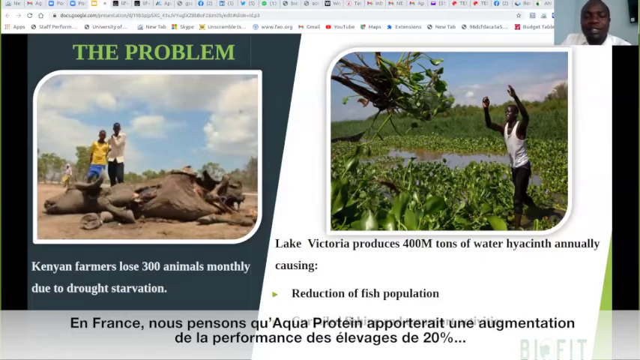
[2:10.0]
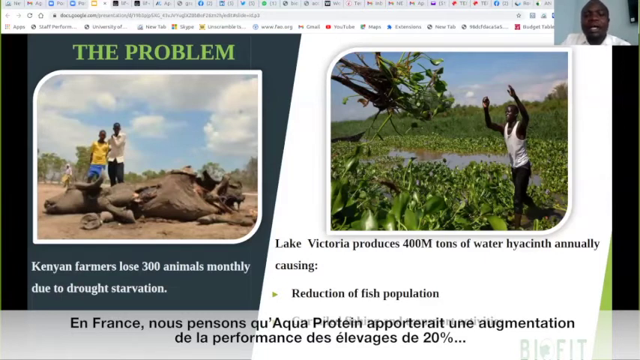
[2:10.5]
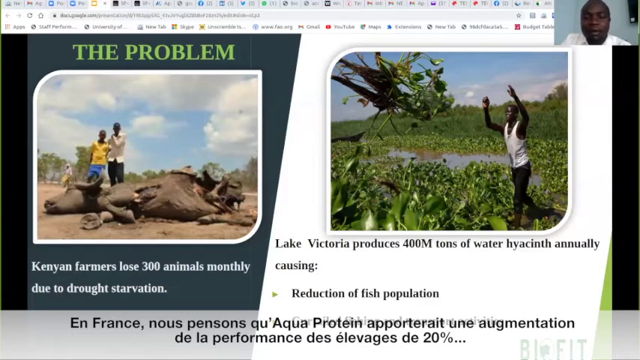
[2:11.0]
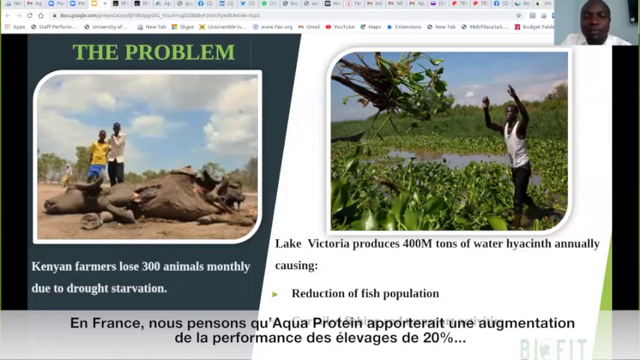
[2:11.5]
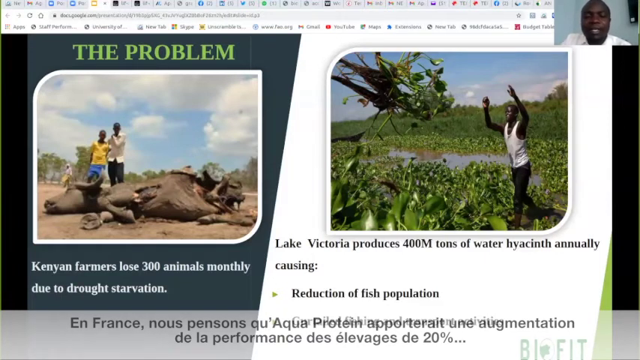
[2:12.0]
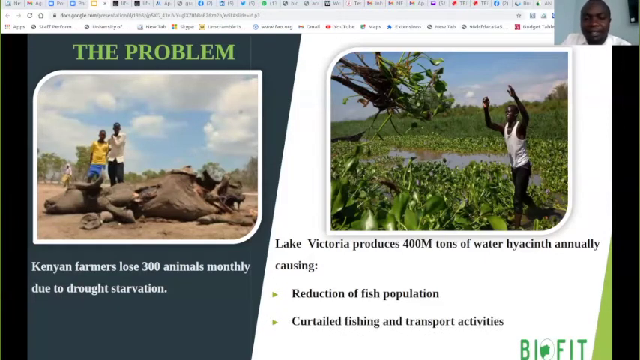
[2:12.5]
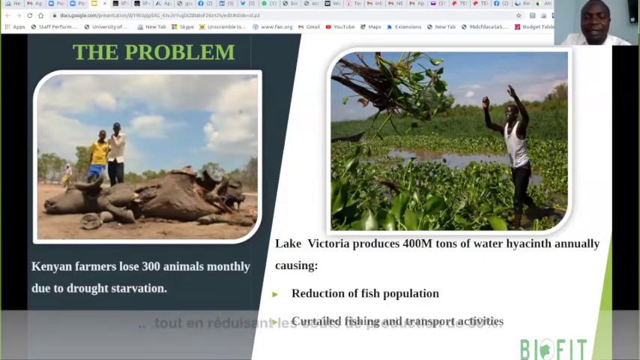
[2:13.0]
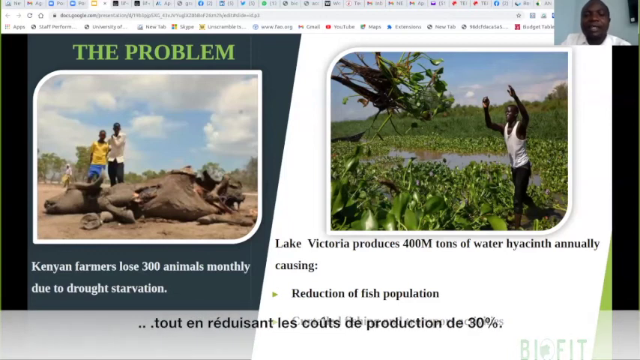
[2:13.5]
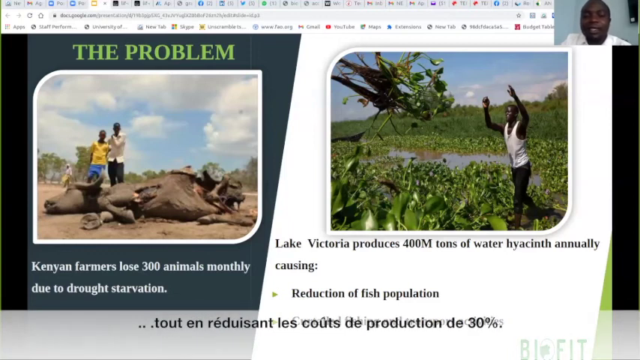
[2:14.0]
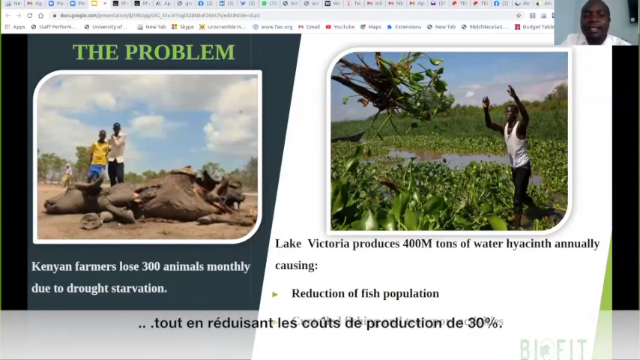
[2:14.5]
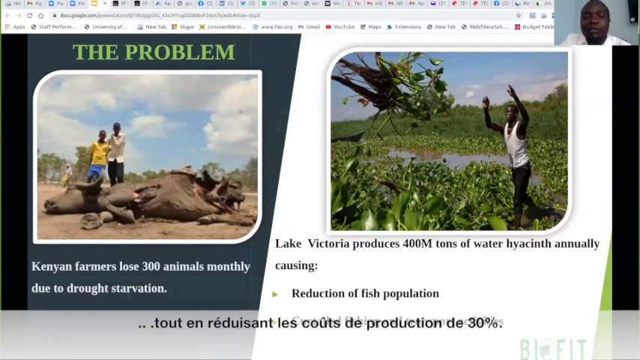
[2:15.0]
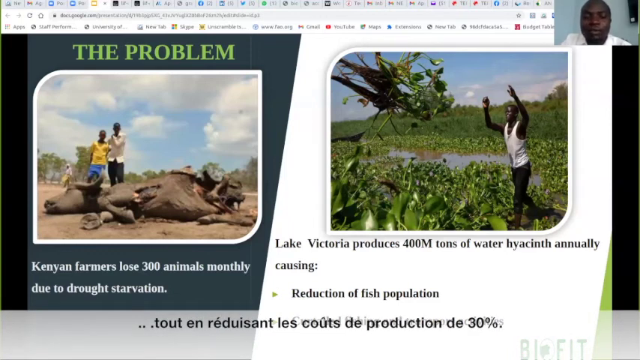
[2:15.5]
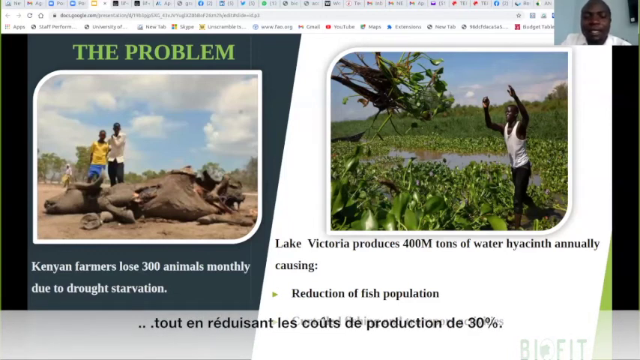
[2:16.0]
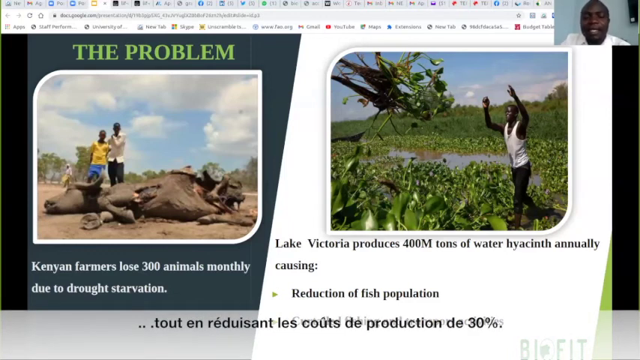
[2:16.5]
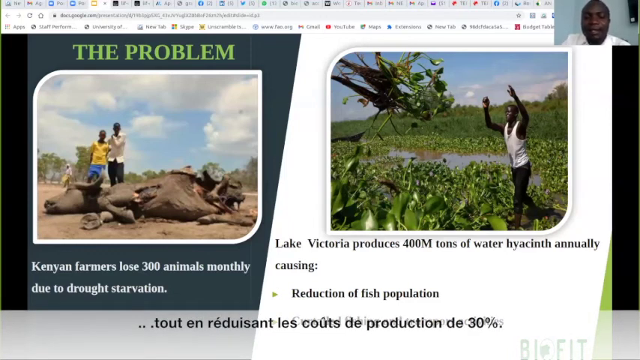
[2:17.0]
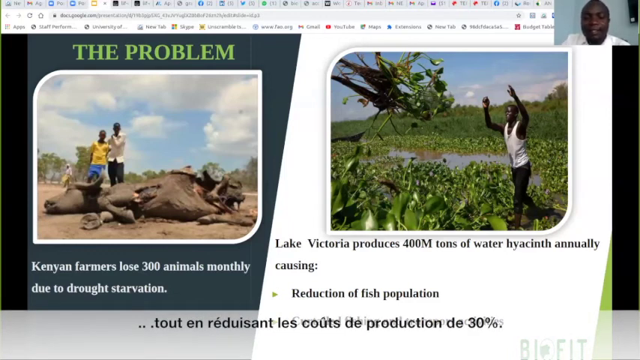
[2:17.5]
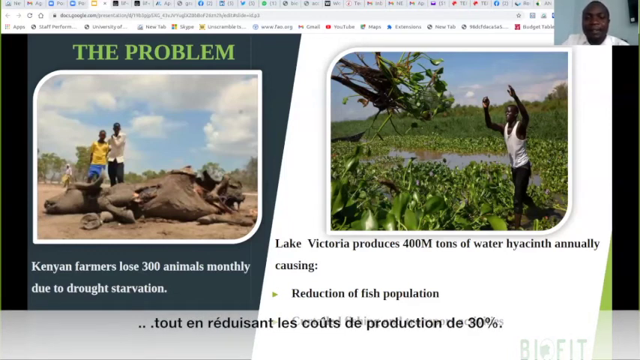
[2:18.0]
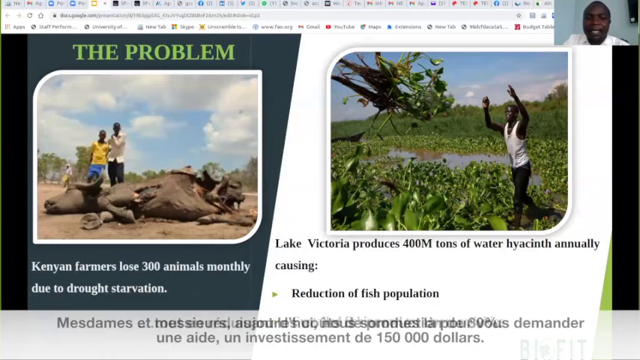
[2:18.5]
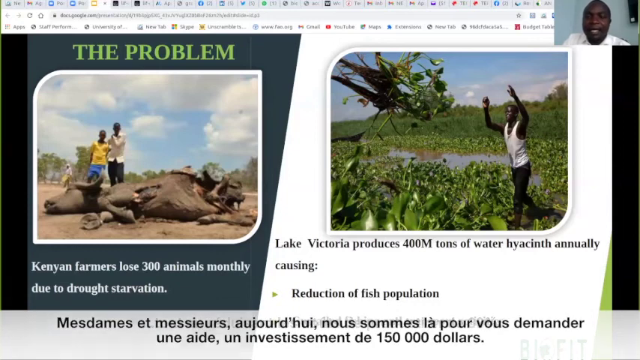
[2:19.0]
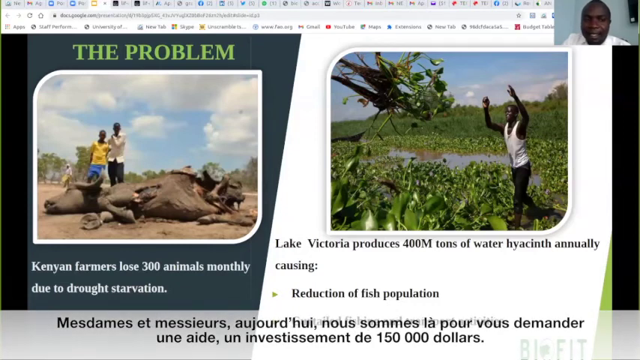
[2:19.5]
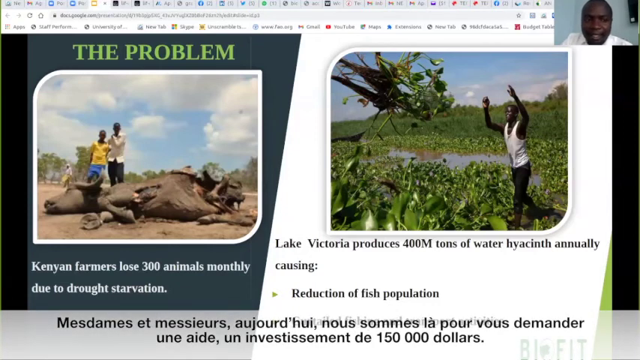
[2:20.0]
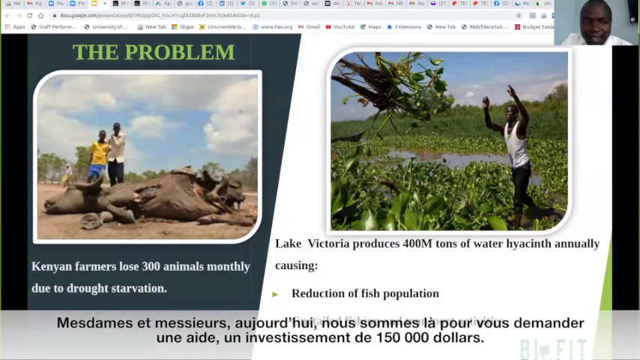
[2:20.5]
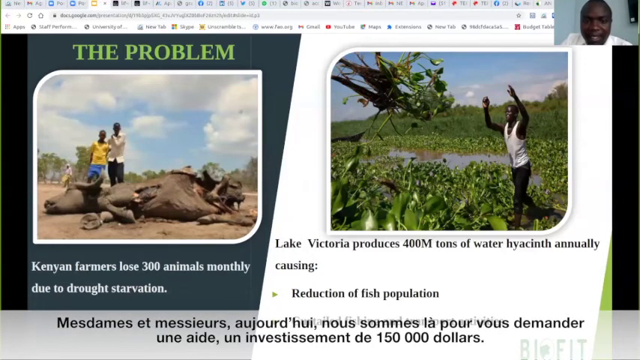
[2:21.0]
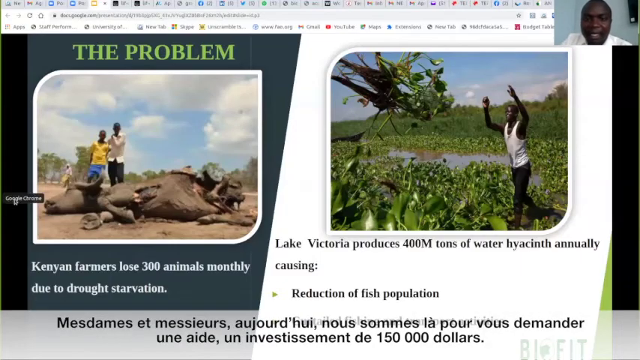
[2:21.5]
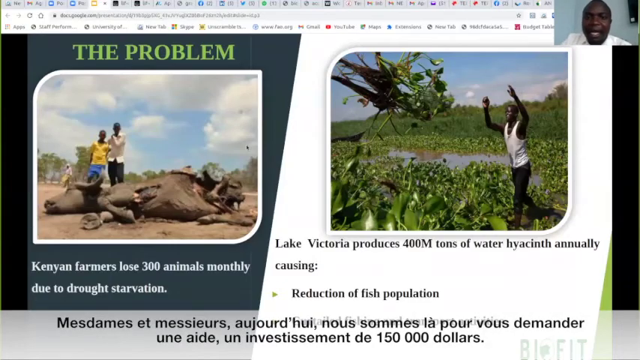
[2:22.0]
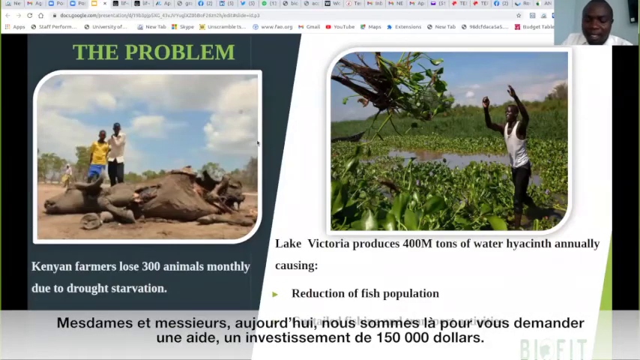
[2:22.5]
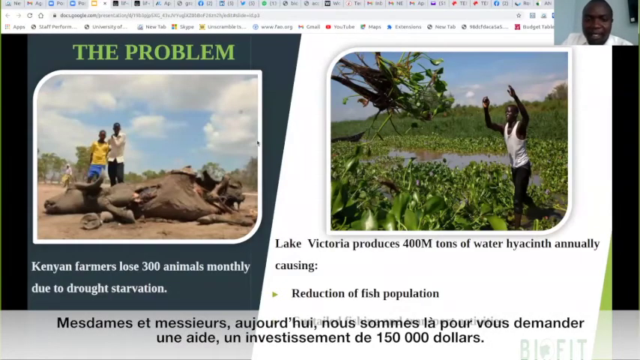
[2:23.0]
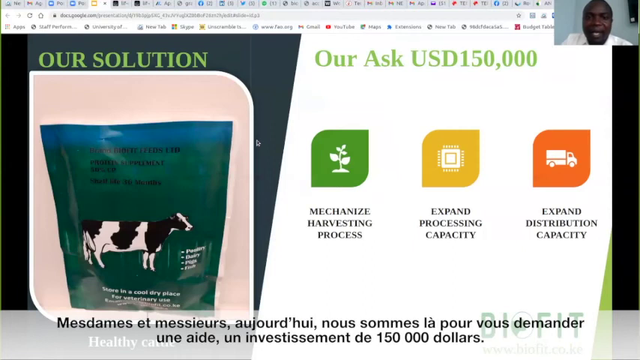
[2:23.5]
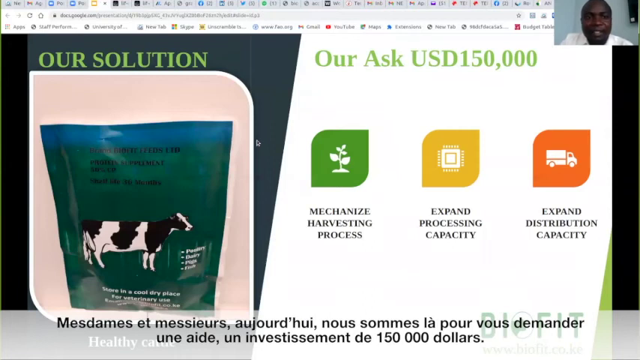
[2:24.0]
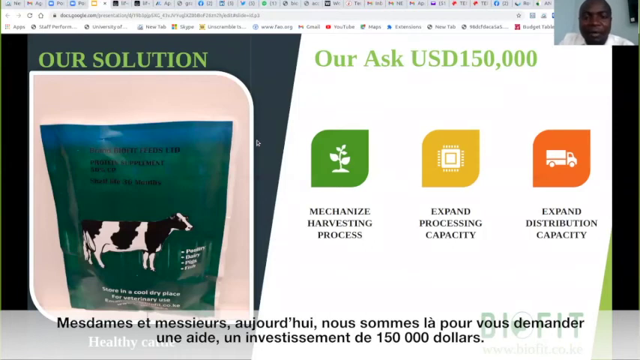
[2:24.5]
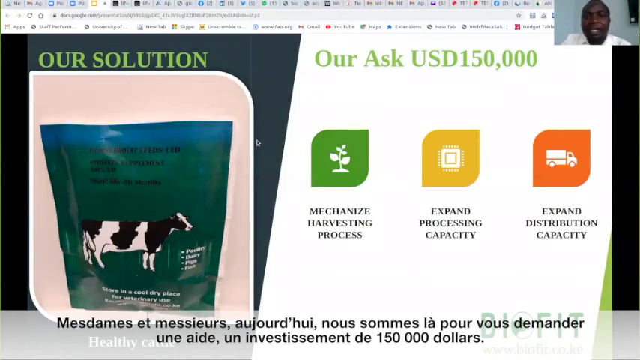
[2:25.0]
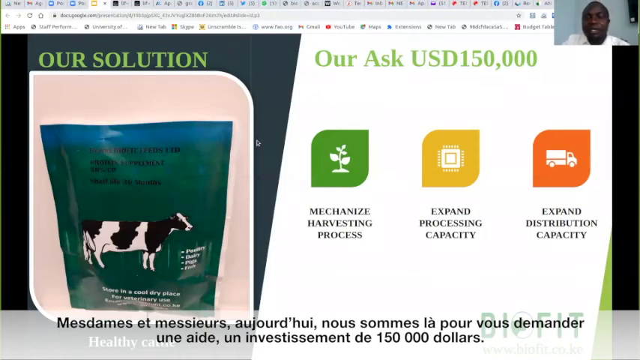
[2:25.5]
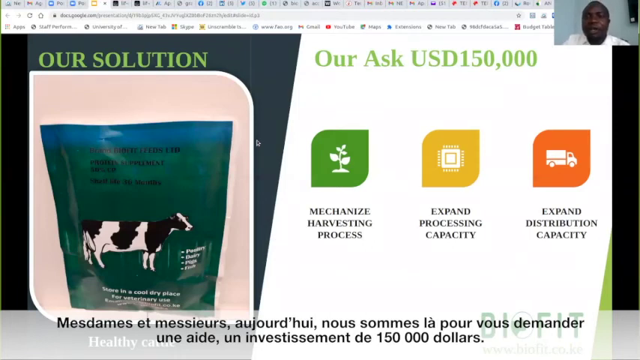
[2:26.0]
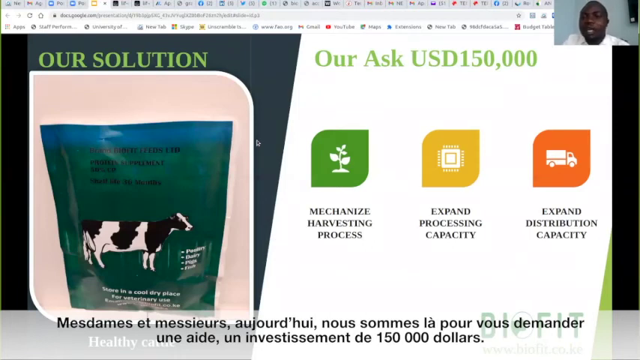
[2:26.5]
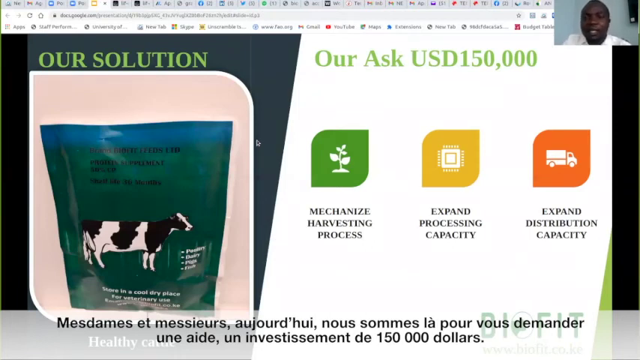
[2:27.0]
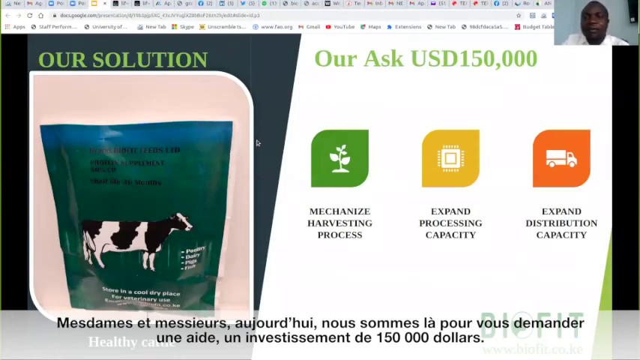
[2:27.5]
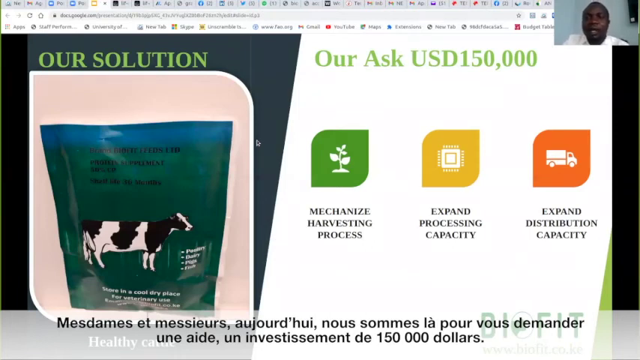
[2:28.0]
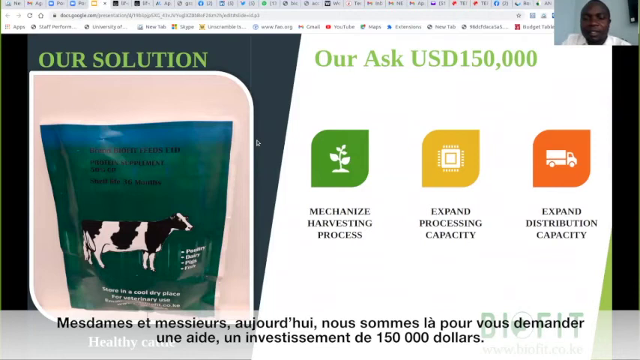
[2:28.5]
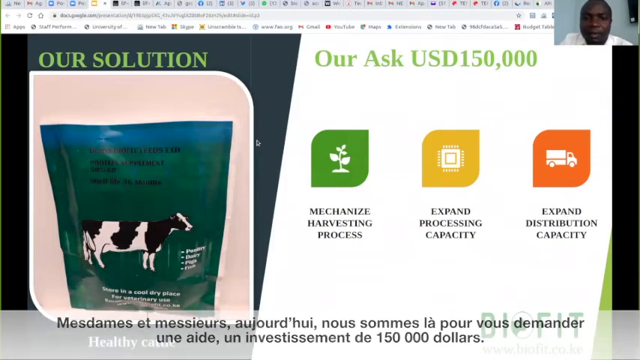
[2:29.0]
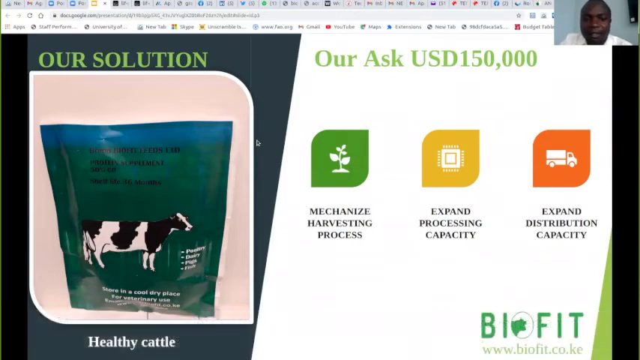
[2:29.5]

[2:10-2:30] The man is still talking on the same screen. The slide appears to ask for donations of $150,000 to mechanize the harvesting process, expand processing capacity, and expand distribution capacity.